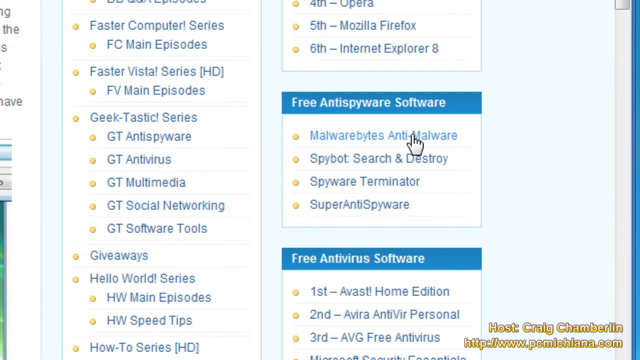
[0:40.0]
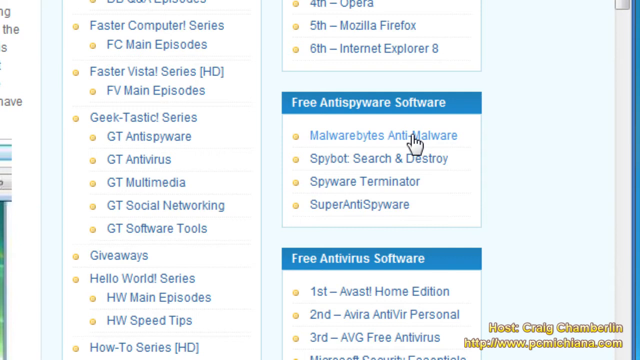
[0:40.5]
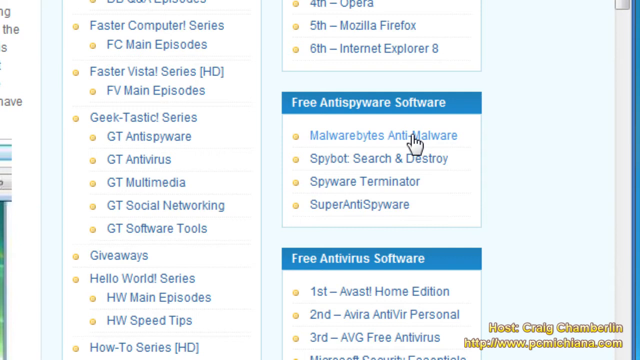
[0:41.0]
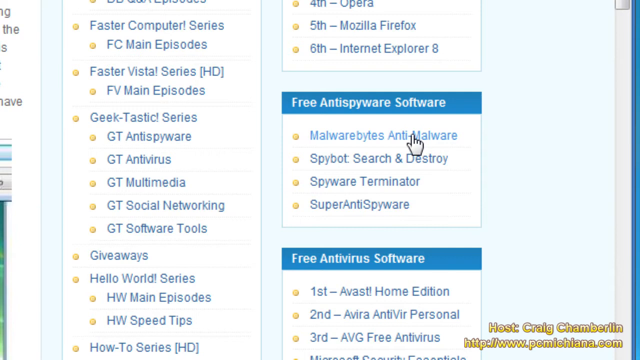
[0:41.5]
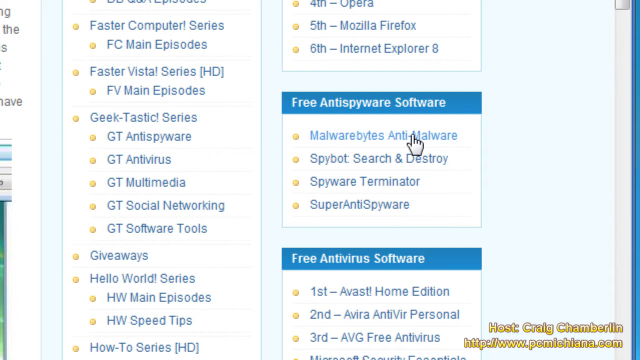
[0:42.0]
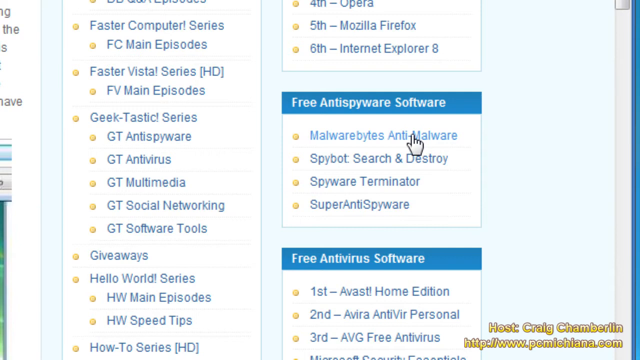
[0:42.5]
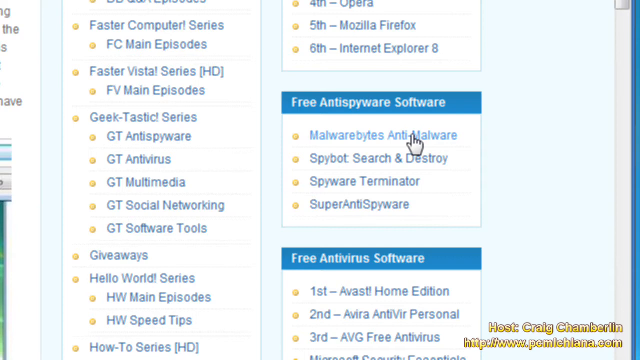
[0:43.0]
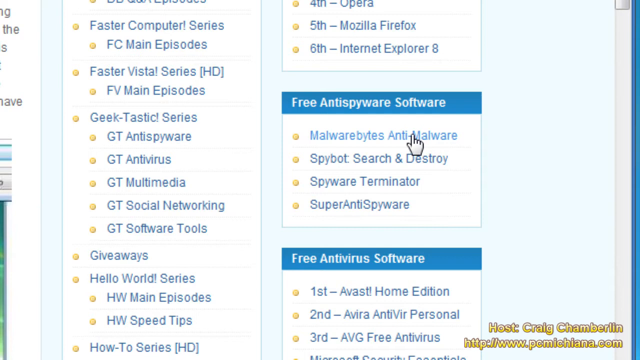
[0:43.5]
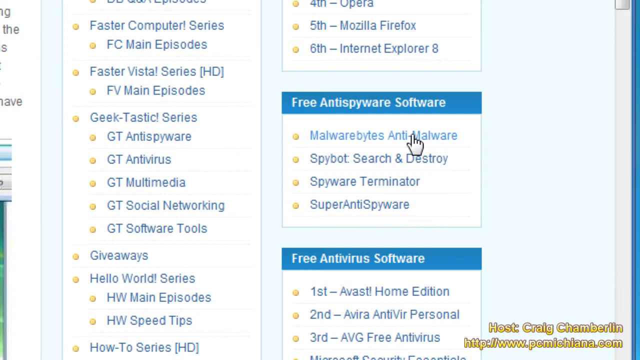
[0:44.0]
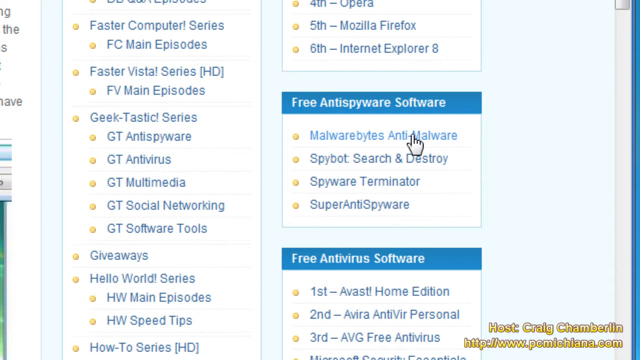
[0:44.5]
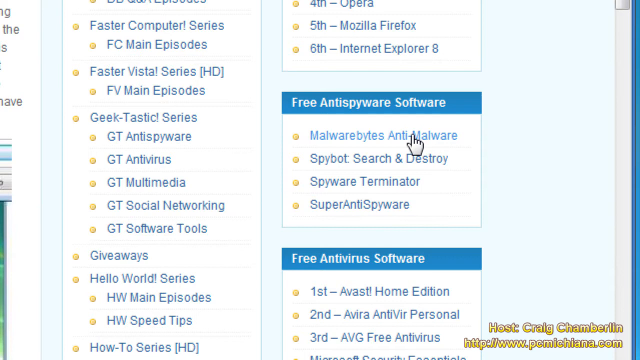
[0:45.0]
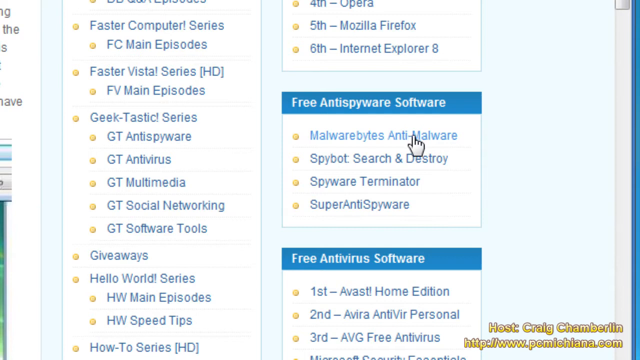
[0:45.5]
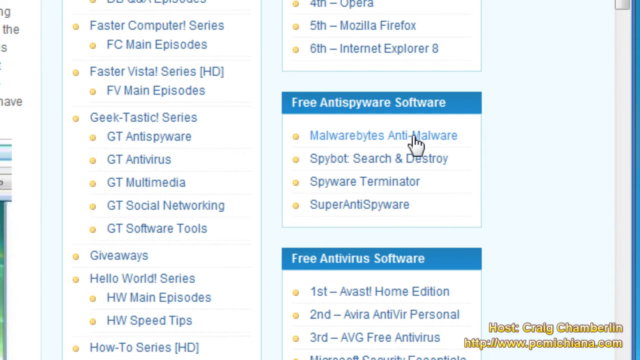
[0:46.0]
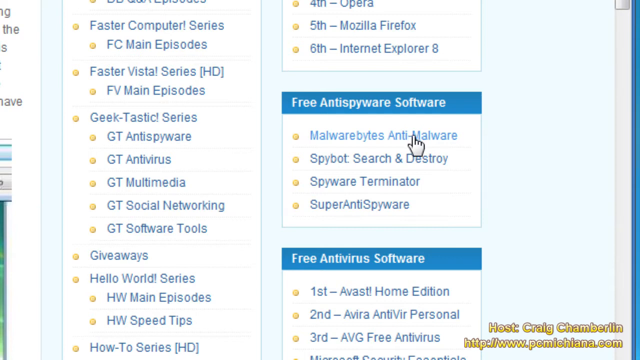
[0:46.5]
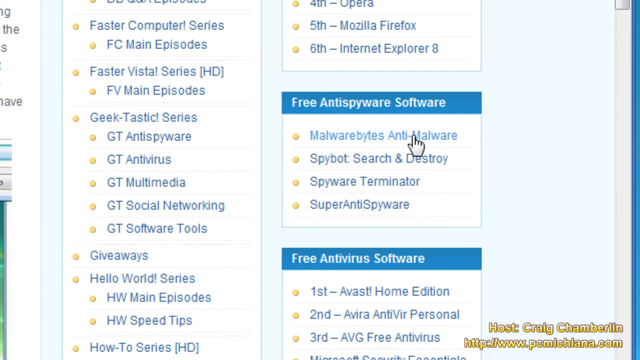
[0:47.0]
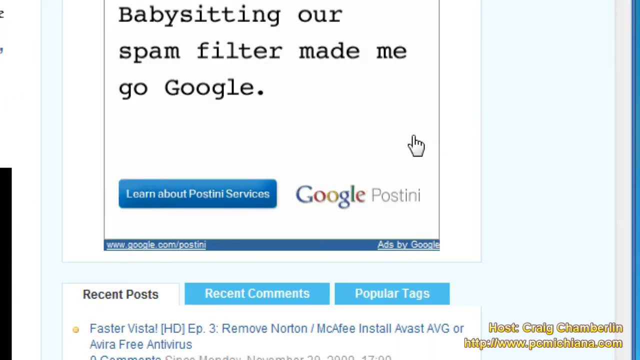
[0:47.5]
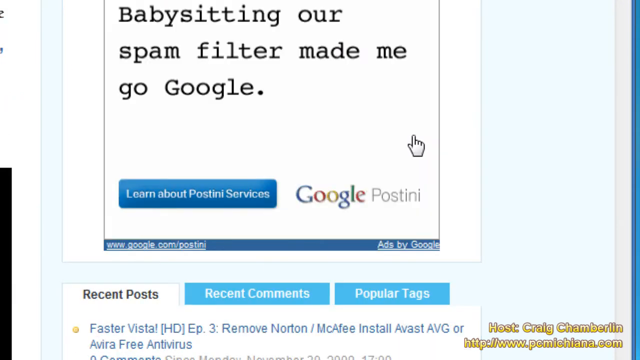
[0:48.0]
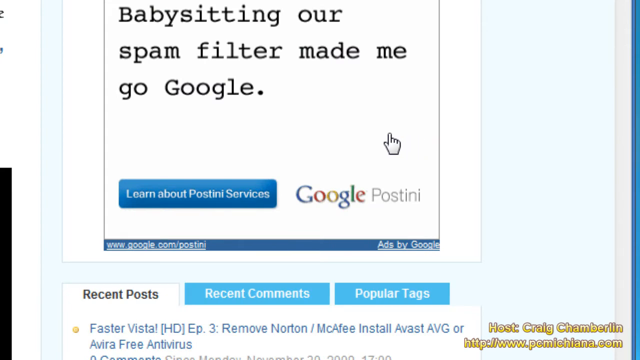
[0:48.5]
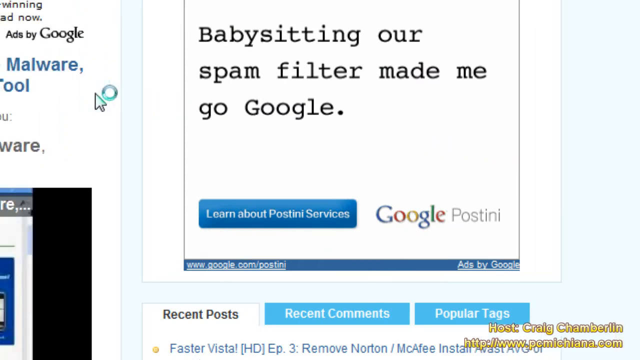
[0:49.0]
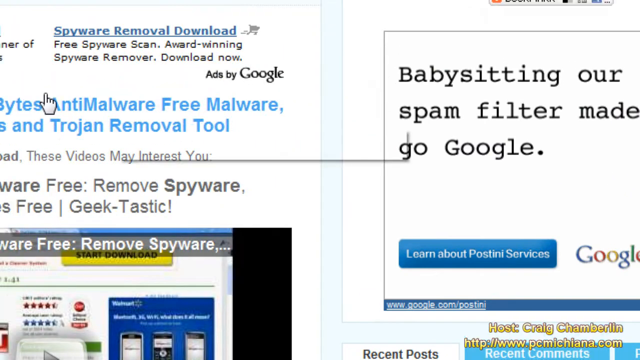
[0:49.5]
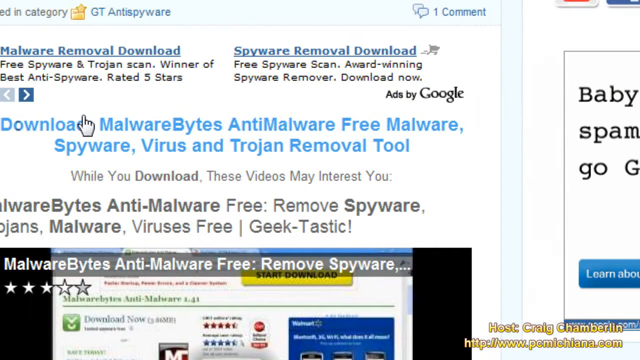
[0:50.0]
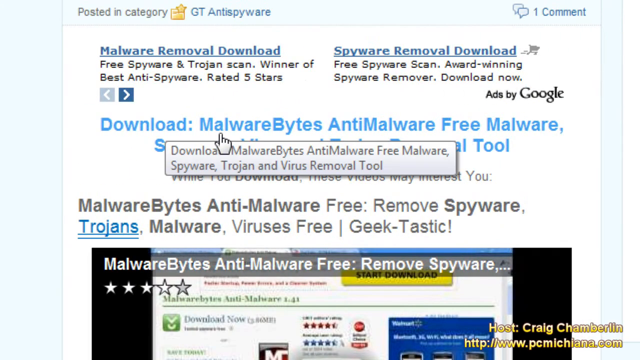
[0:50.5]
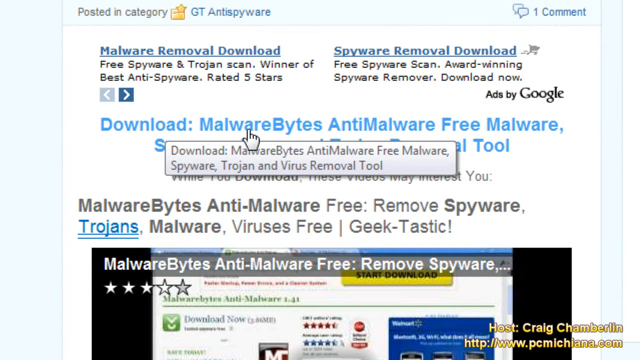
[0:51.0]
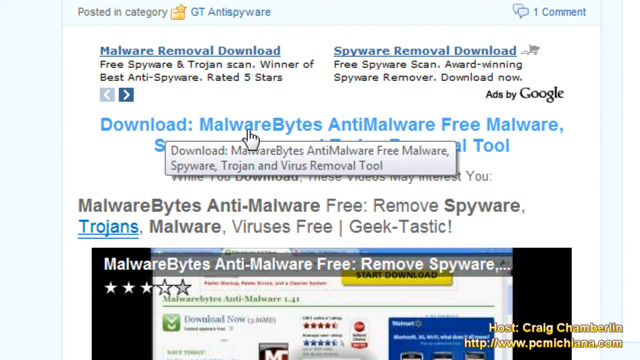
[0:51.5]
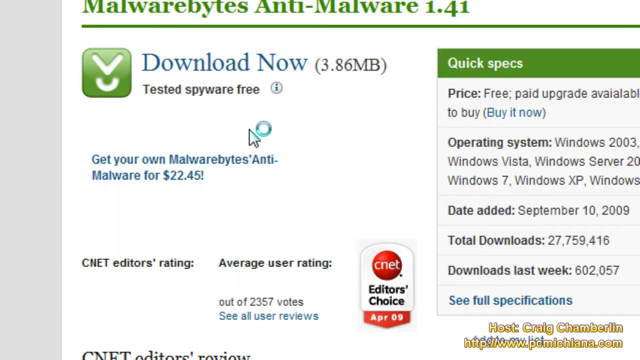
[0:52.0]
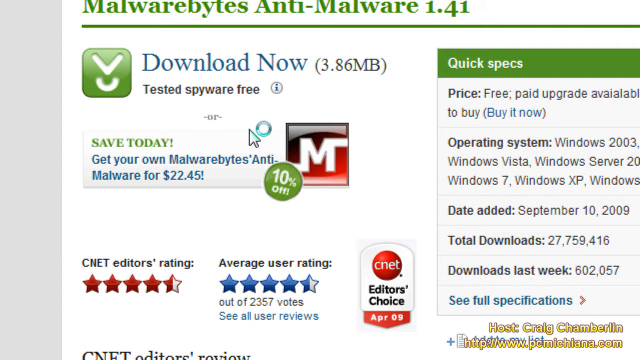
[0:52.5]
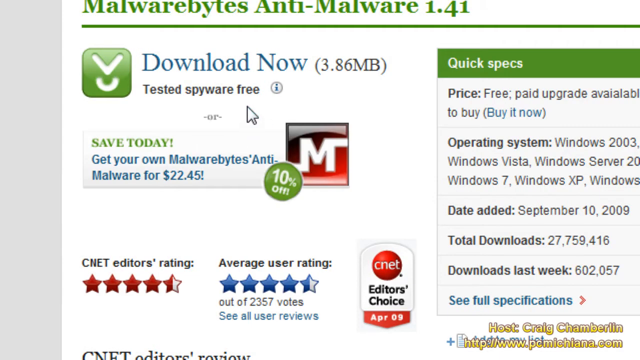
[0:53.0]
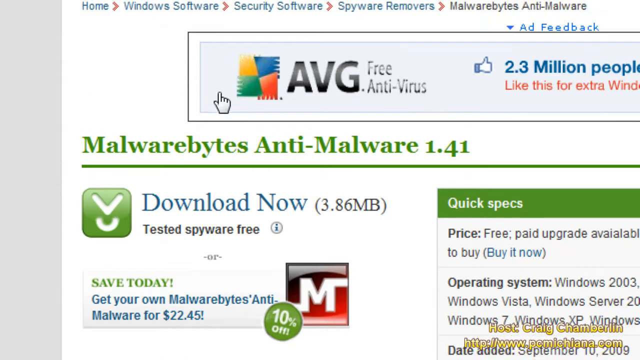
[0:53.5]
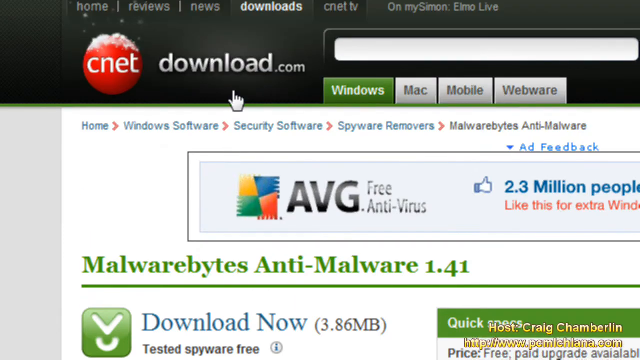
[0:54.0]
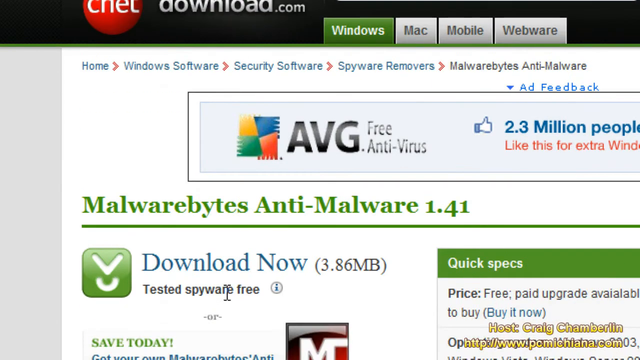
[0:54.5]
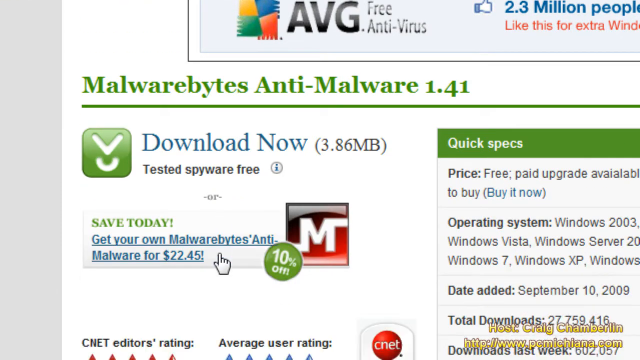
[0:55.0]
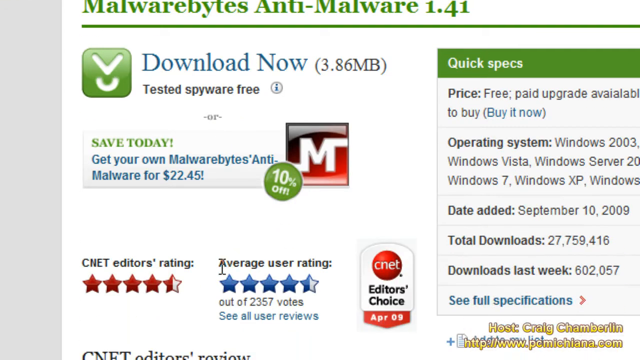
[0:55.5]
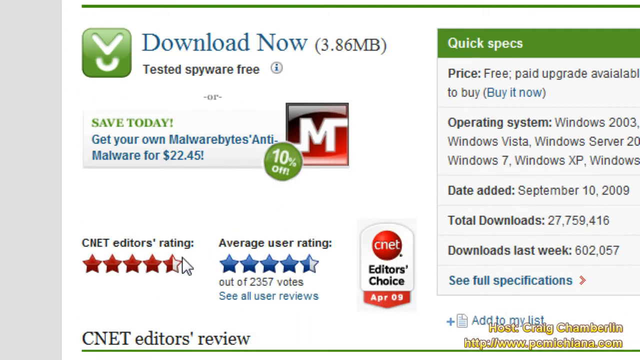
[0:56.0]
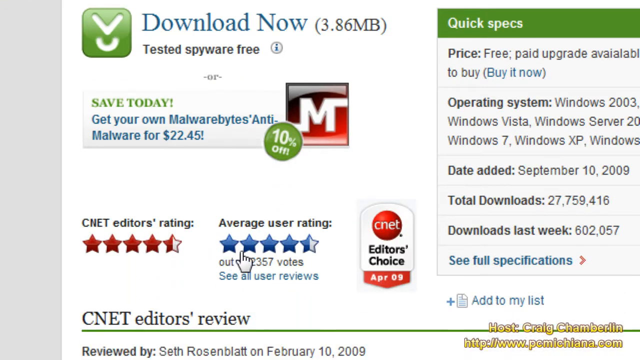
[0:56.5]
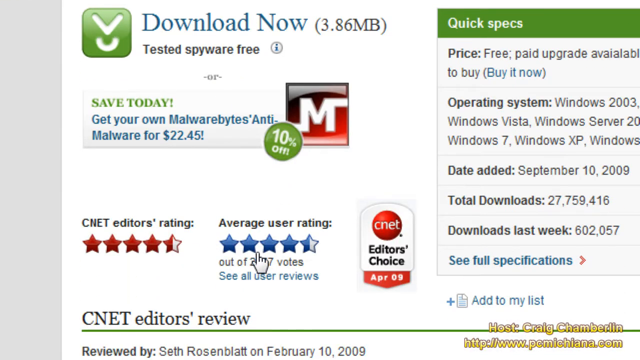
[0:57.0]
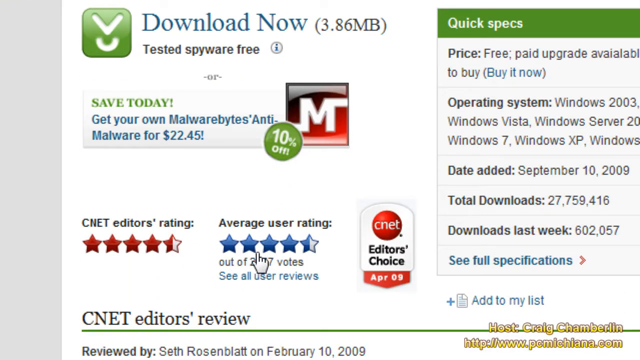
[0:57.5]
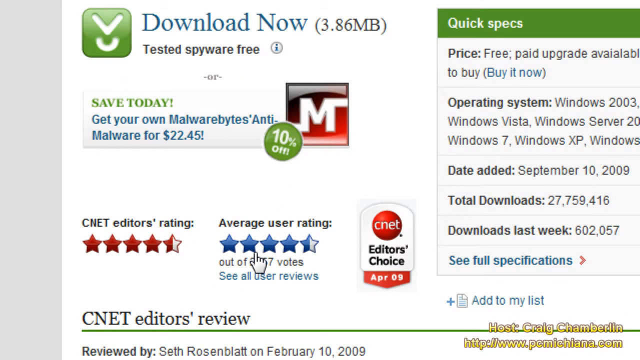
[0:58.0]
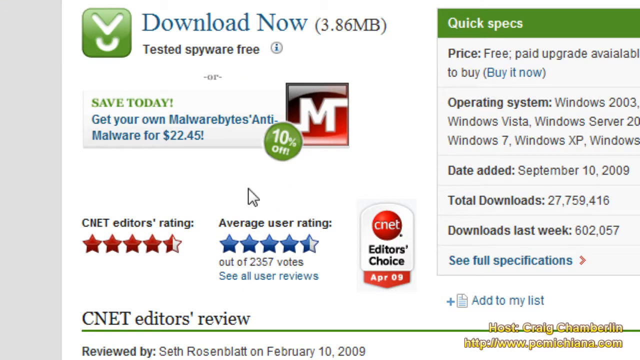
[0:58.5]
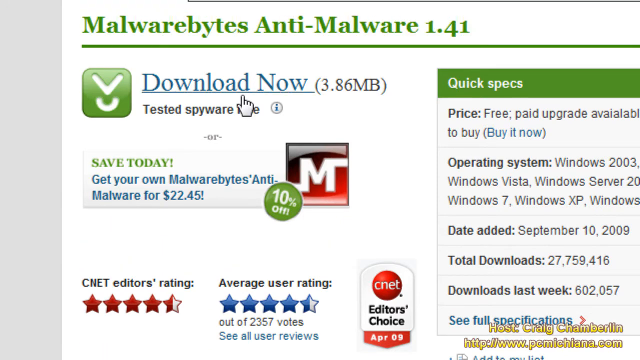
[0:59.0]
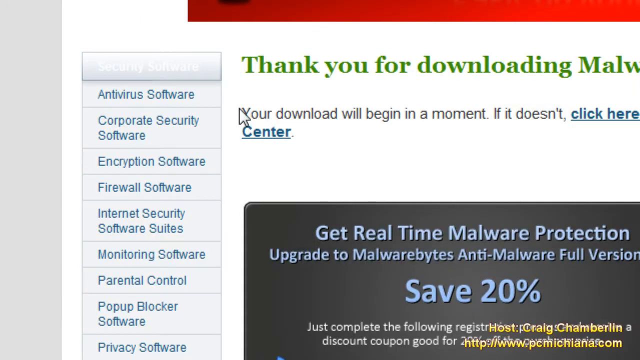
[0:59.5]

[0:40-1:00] Under the Free Anti-Spyware Software section there are several options, including downloading anti-spyware software. Under the Download Now section there are ratings, including "Average User Rating" and "CBT Rating". A "Thank you for downloading" message appears, with further options beneath it. The person, giving a tutorial, clicks on the anti-malware entry to go to that section and download Malwarebytes.